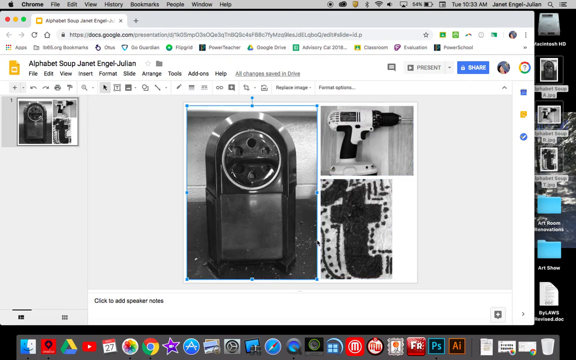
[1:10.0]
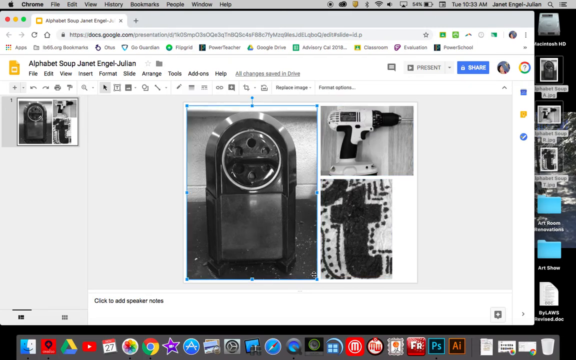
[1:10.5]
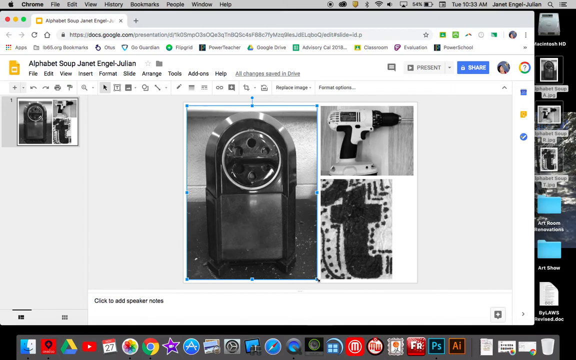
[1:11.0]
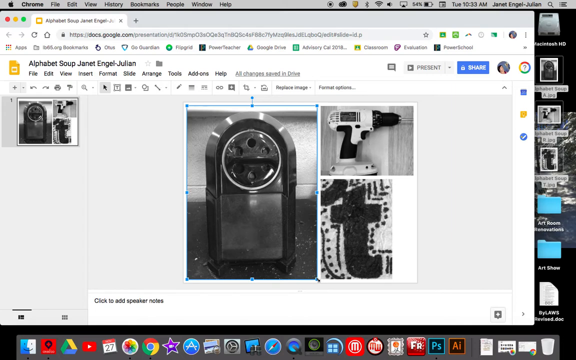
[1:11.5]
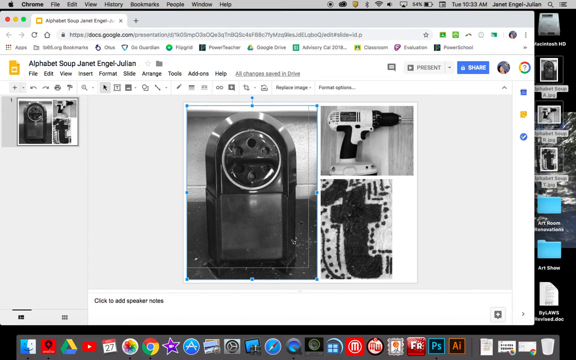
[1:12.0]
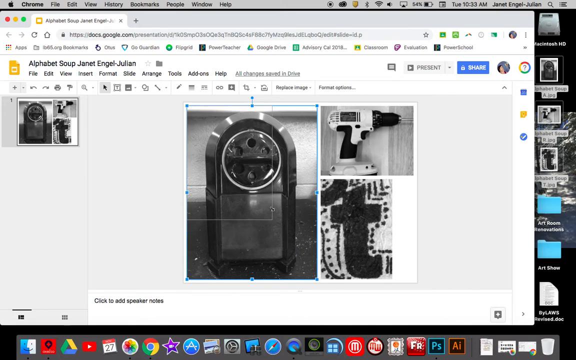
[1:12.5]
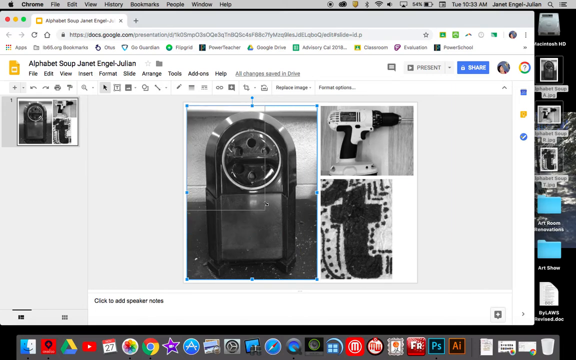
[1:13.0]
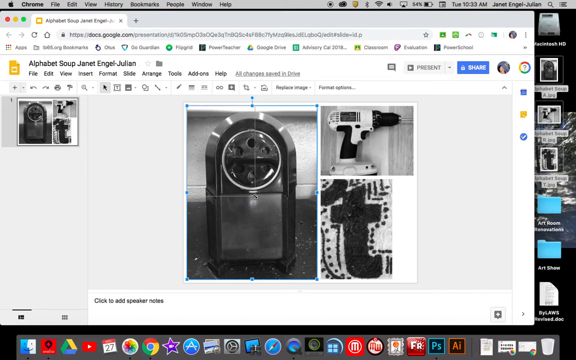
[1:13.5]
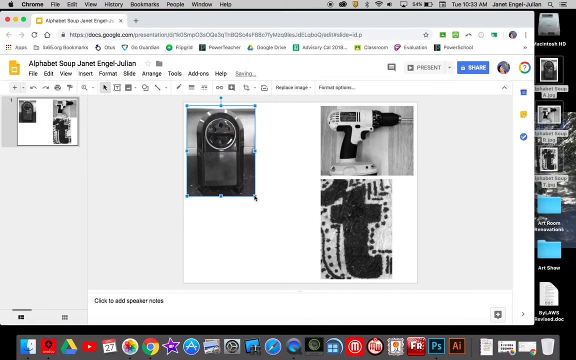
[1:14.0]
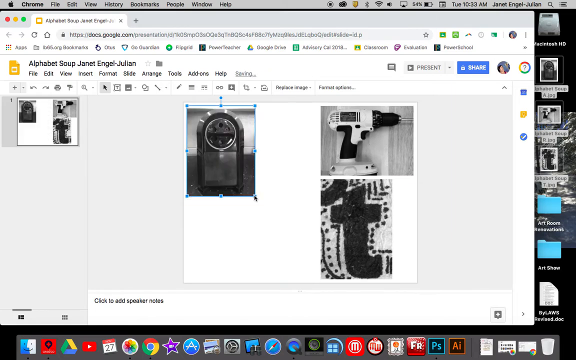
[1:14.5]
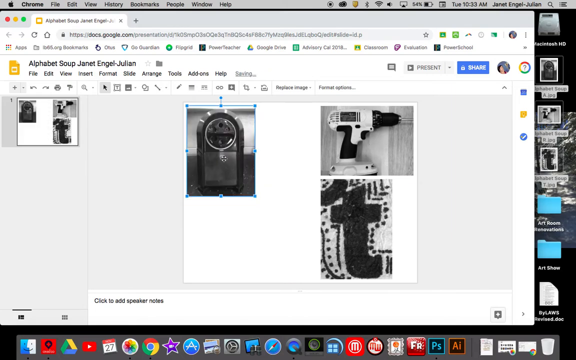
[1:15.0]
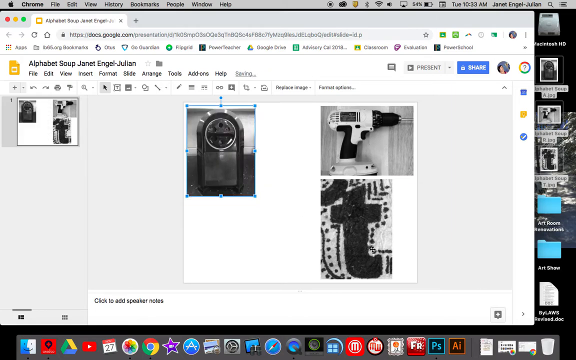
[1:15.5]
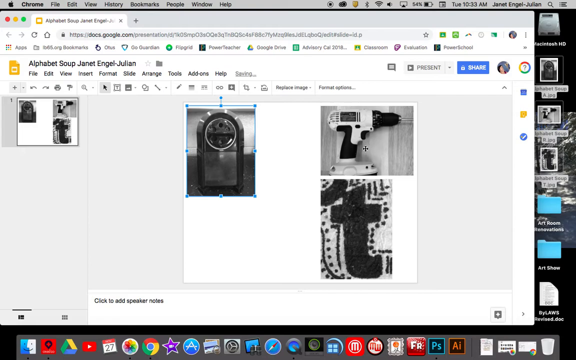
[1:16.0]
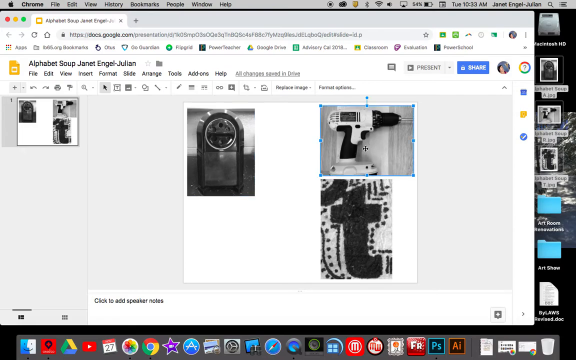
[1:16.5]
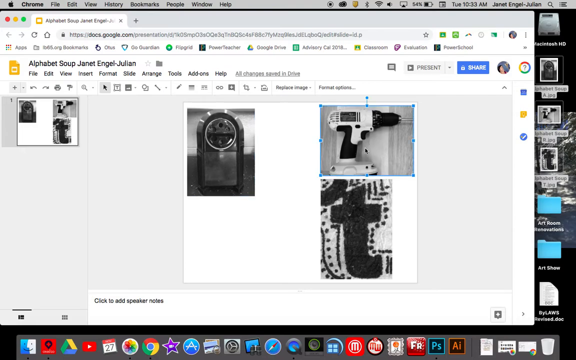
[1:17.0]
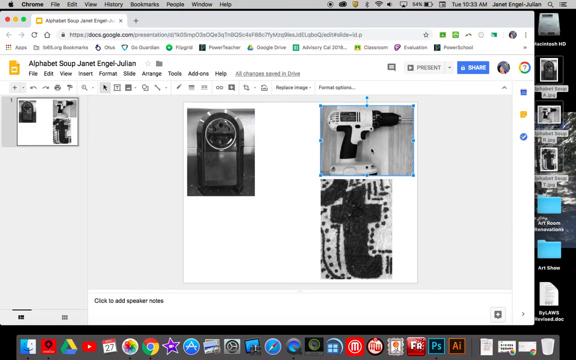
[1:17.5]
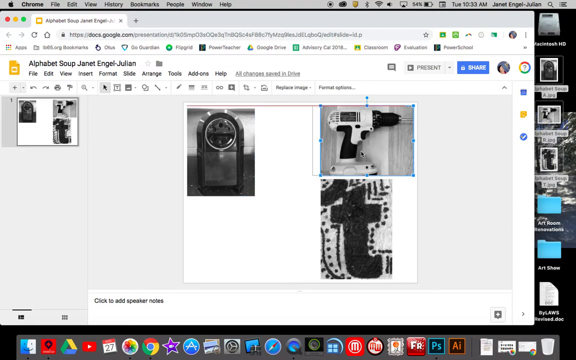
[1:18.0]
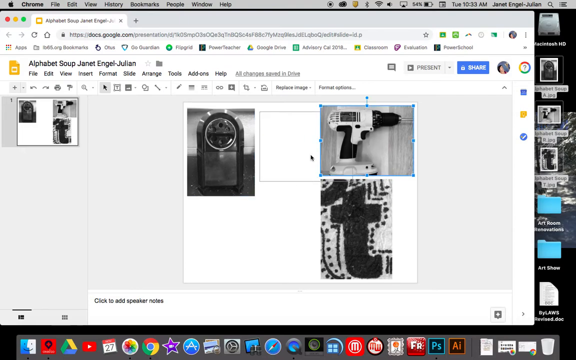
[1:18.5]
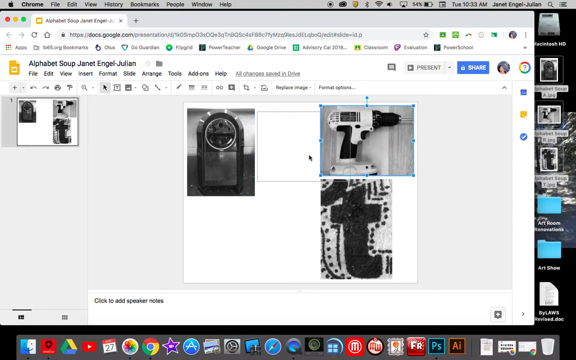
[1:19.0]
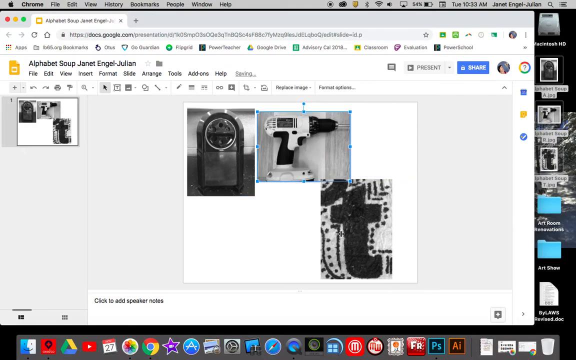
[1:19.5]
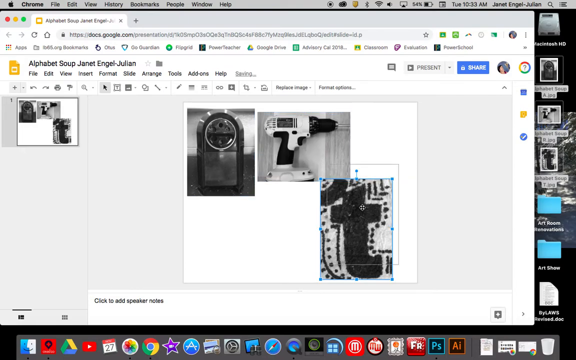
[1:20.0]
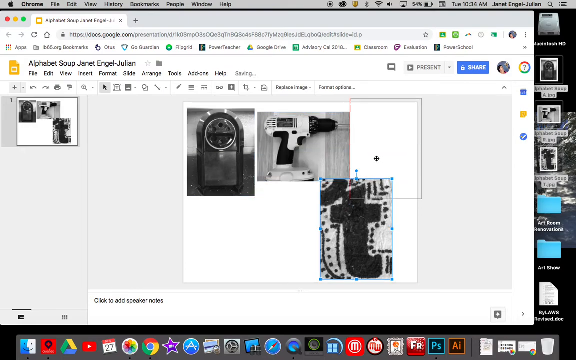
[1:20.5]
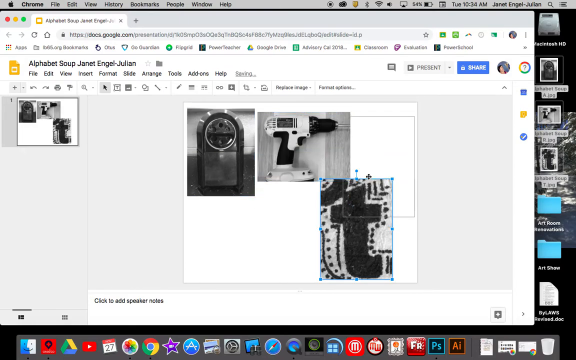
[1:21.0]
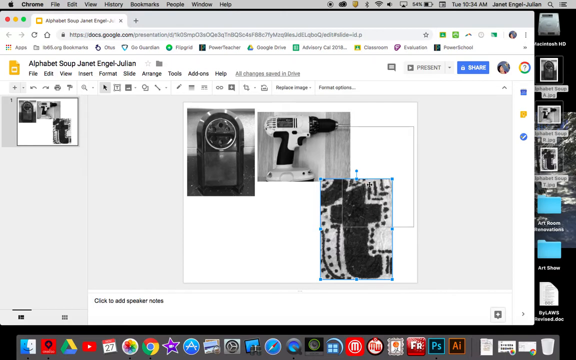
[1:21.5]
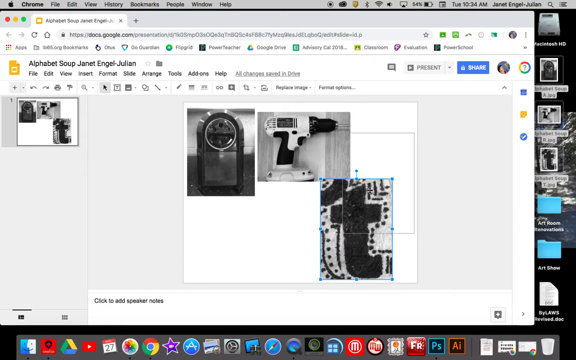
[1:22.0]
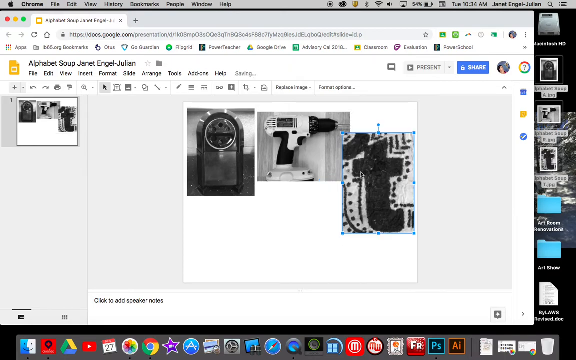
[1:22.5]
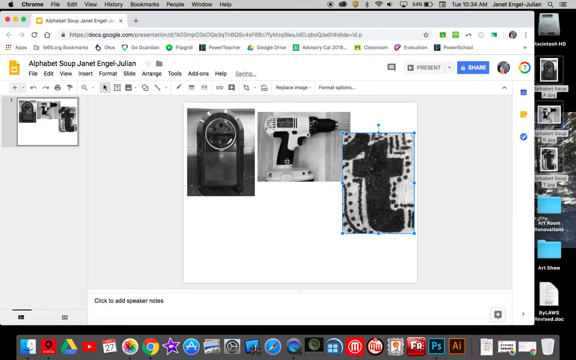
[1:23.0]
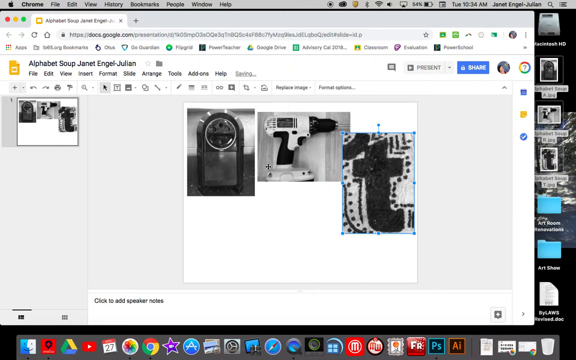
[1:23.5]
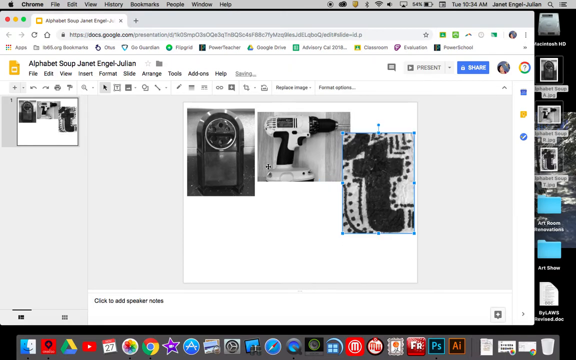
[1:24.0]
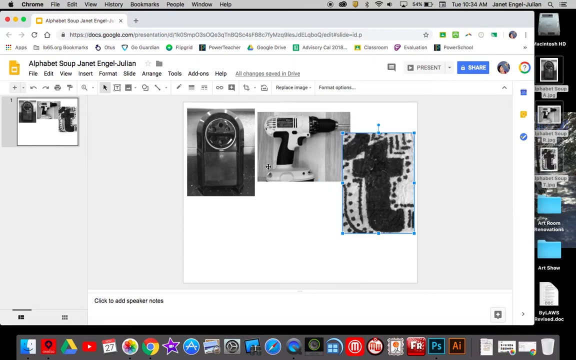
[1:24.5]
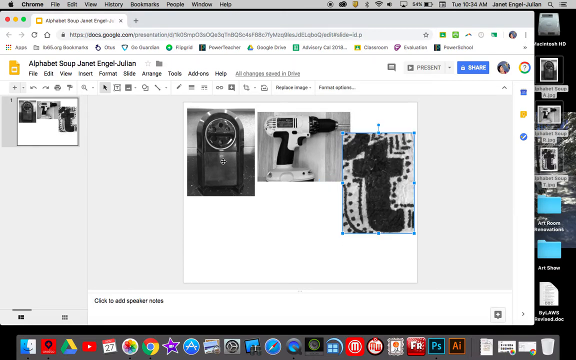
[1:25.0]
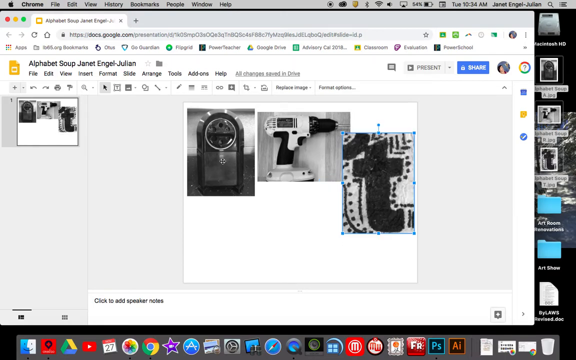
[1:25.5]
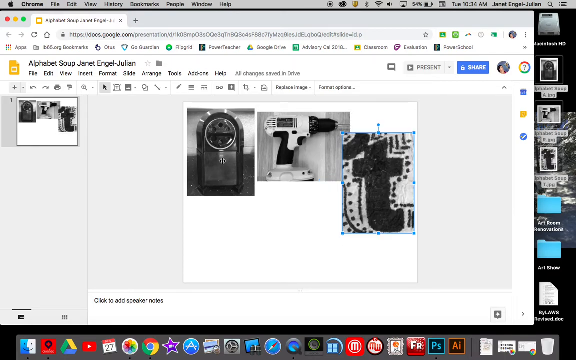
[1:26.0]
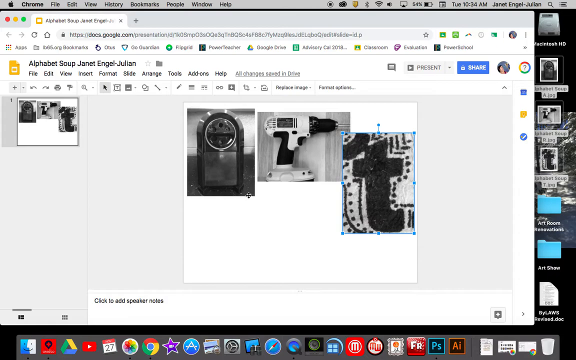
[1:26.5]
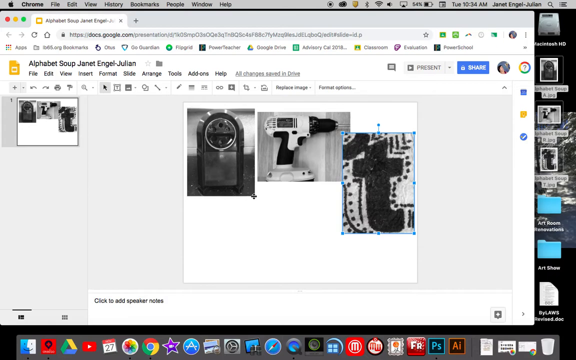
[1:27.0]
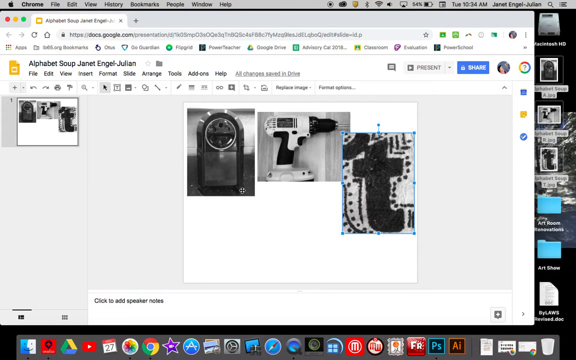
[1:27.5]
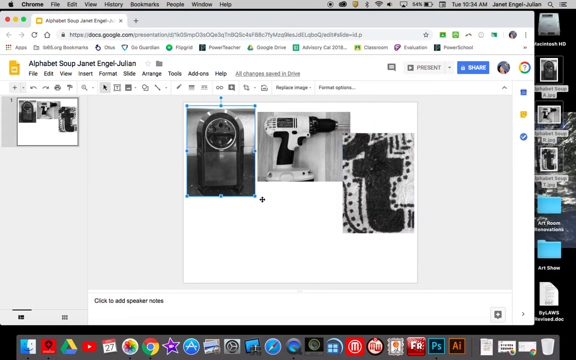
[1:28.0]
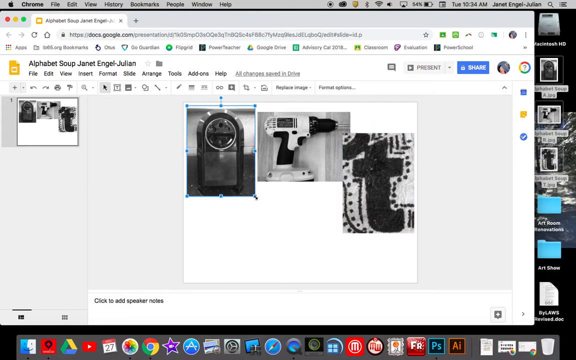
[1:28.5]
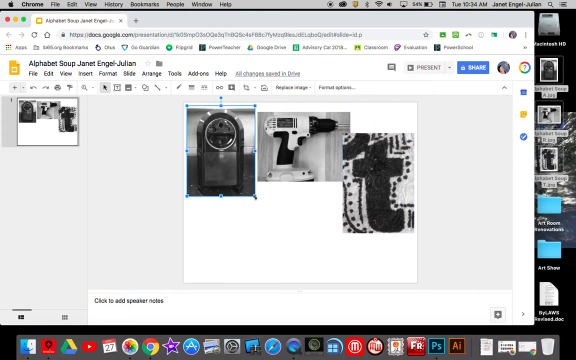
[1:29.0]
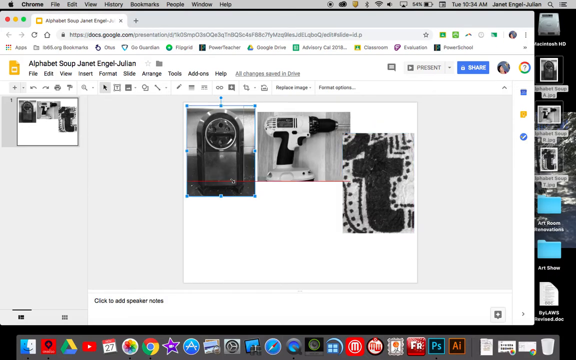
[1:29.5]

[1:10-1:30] A Chrome browser on an Apple computer shows a white Google Docs page with three images inserted in the middle of the screen. The leftmost image, selected by the user, has a light blue box around it. The user clicks its bottom right corner and drags upward and left, shrinking the image significantly. The user then clicks the upper right image and drags it next to the resized image, and does the same with the third image, moving it upward next to the second image, where it slightly overlaps on the right border. The user clicks the first image again and drags from its bottom right corner upward and leftward, making it even smaller.